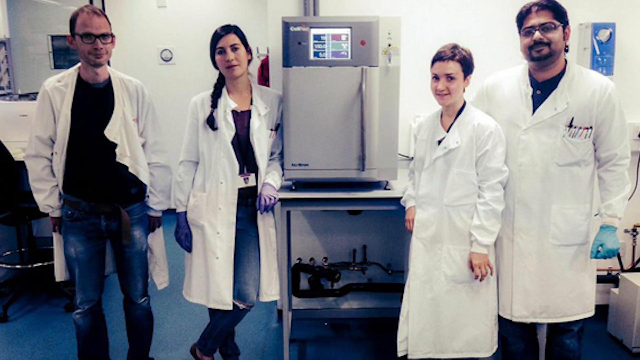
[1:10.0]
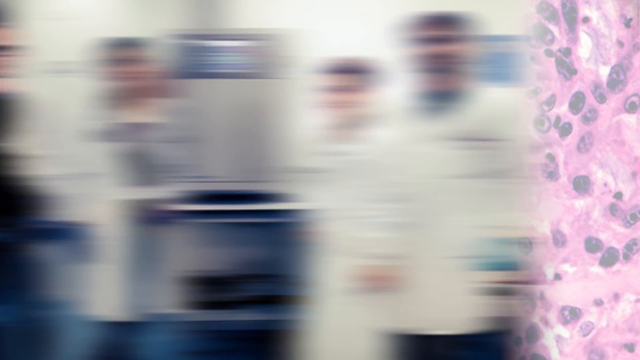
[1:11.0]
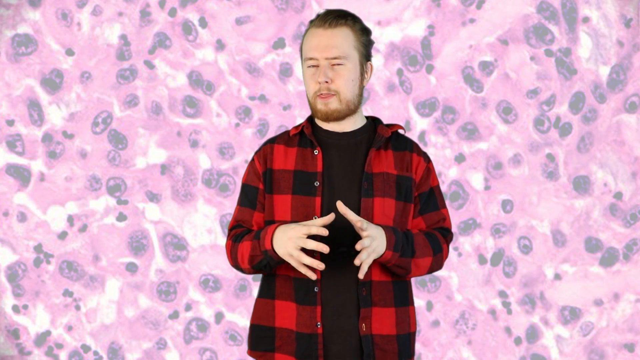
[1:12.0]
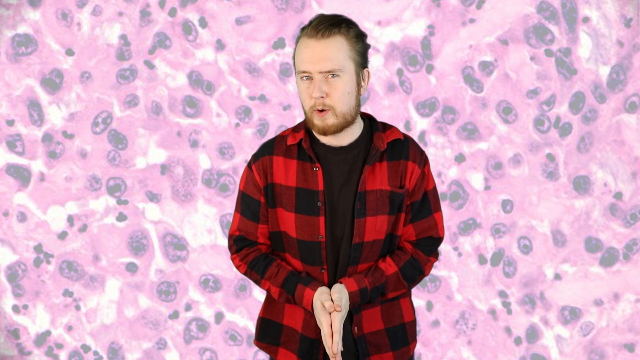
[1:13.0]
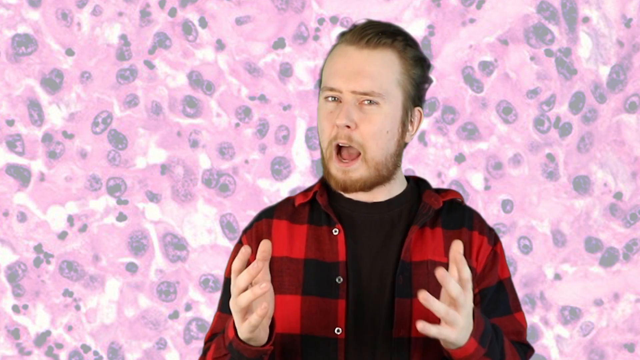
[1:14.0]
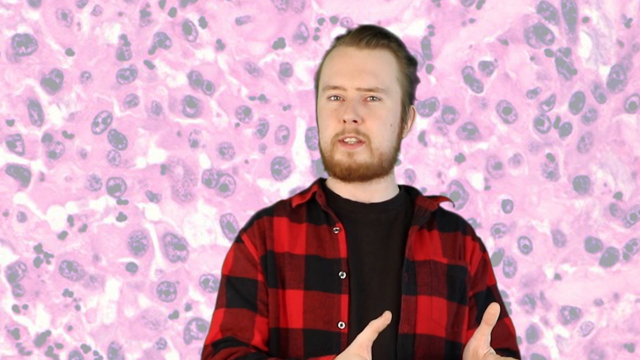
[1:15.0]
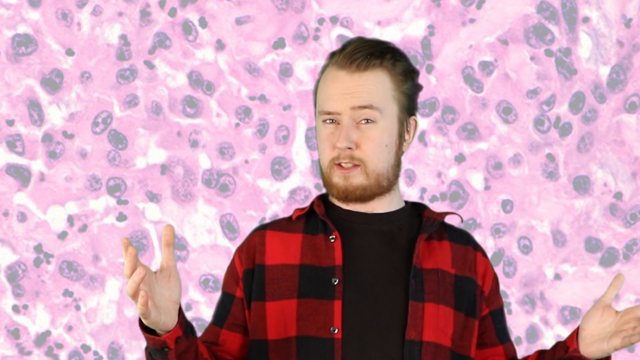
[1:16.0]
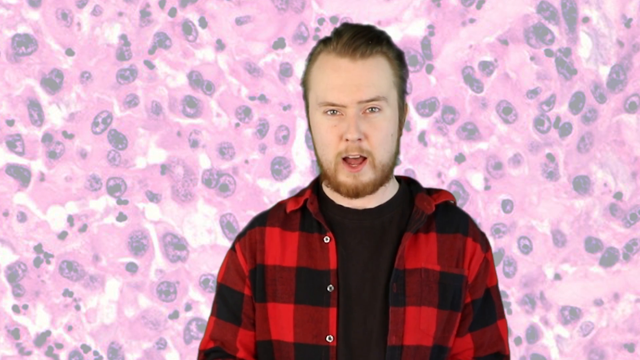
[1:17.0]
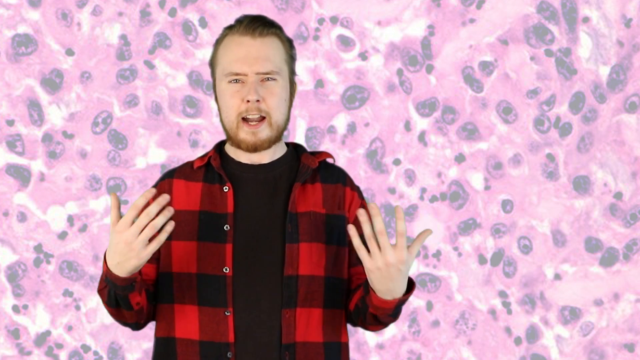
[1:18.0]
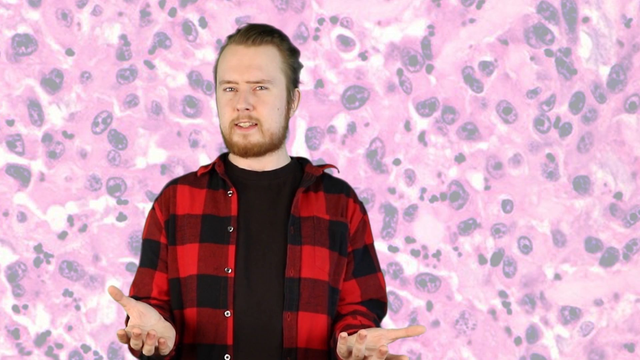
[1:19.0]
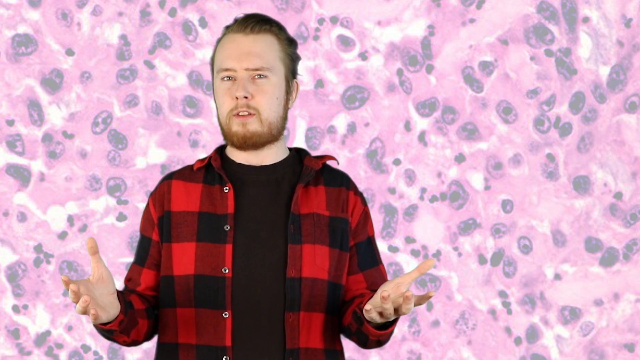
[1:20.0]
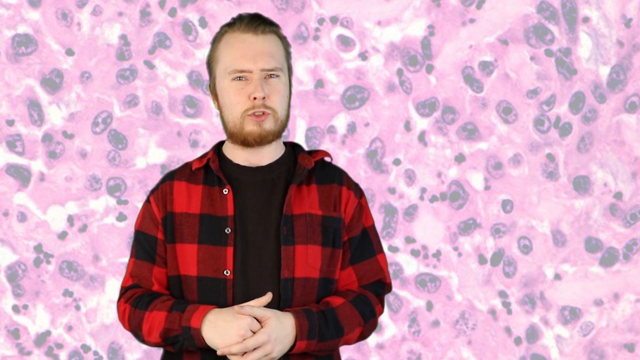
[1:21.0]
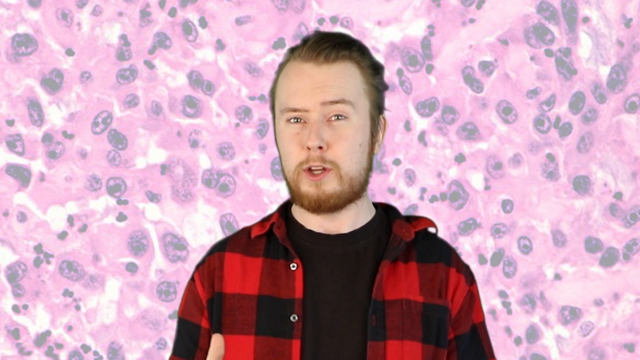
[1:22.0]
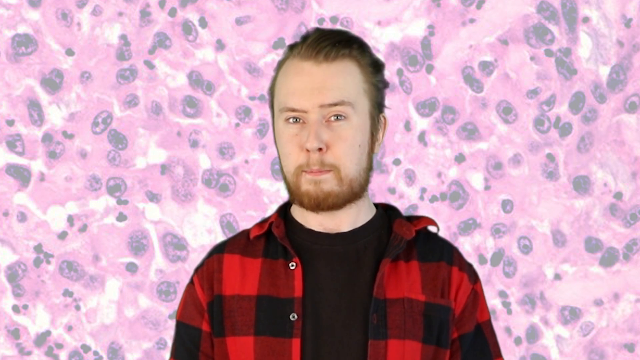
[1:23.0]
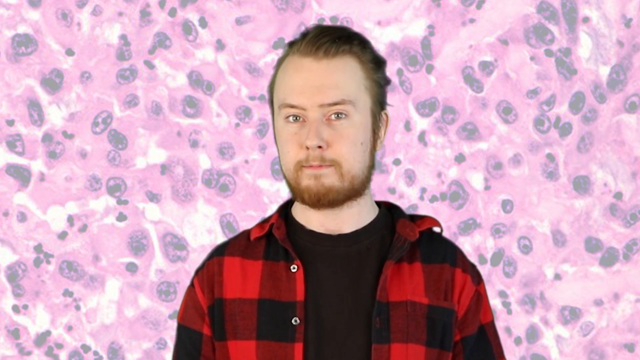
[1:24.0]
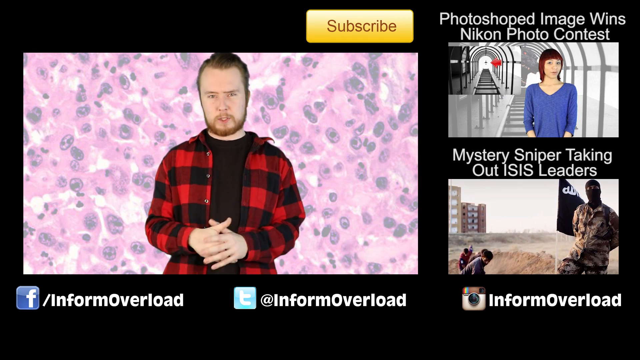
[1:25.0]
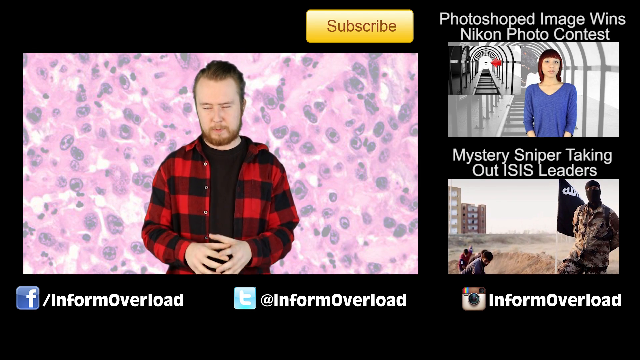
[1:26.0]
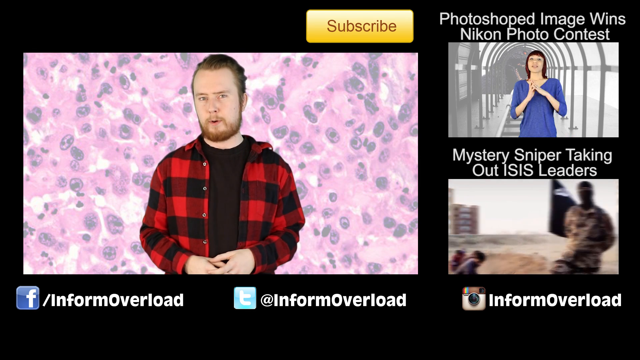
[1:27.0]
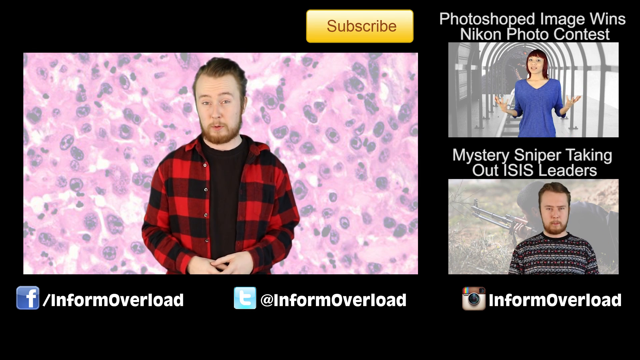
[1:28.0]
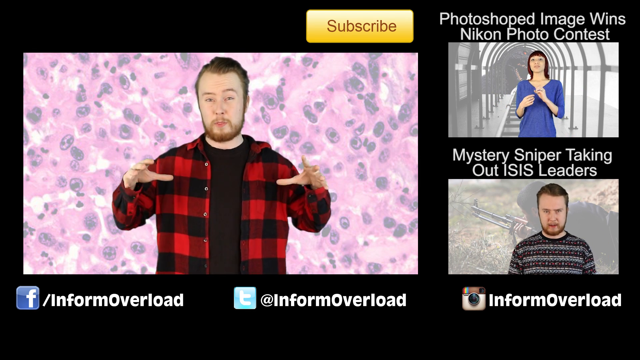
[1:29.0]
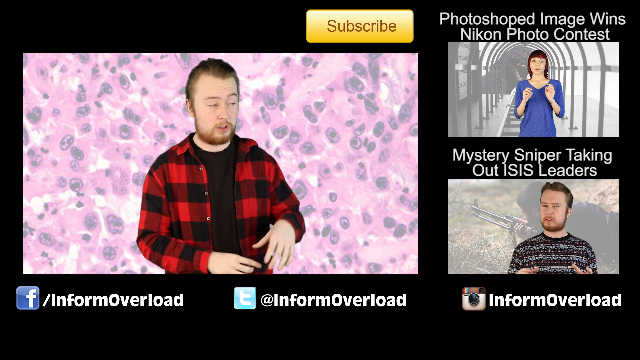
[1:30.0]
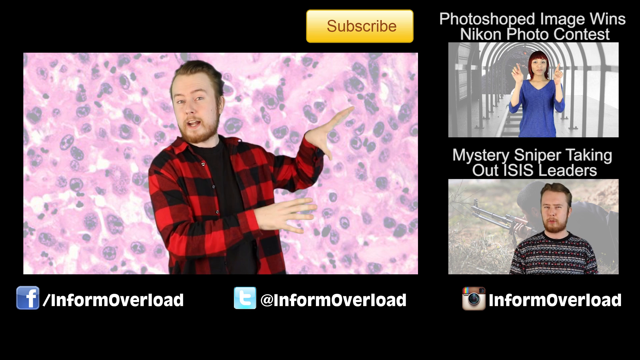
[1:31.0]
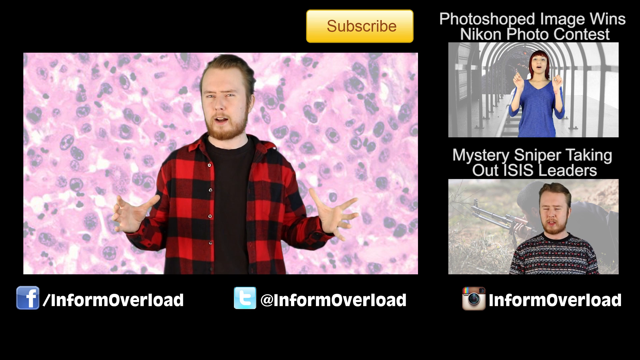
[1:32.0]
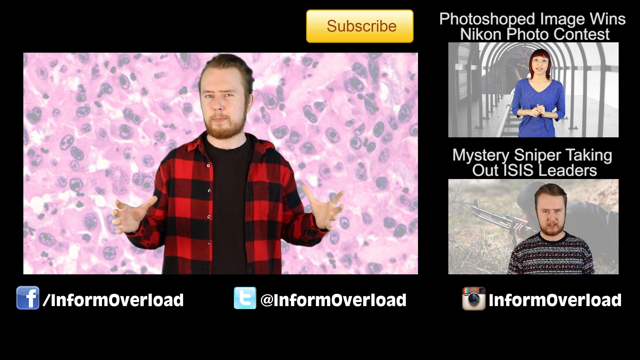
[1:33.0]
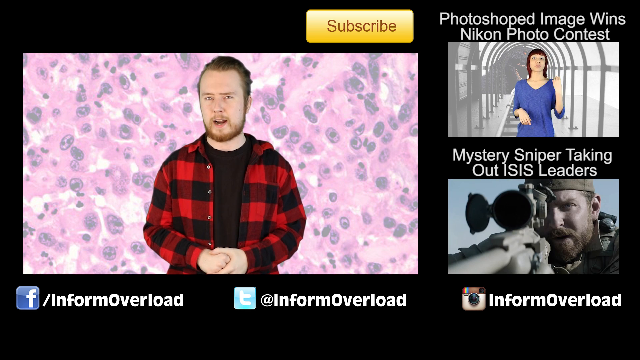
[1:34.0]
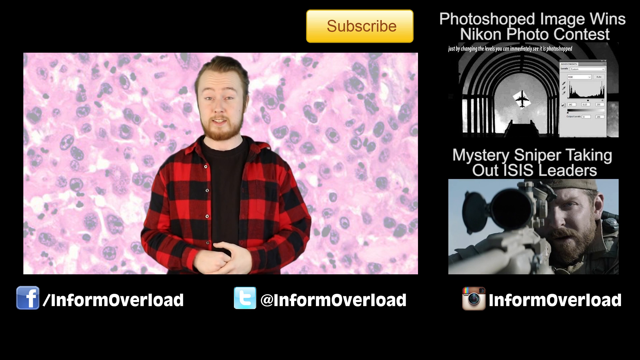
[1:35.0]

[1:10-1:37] Four people who look like scientists, wearing white lab coats, are shown with something that looks like a tiny refrigerator up on a desk in the middle of them. The picture gives way to a man speaking straight into the camera, wearing a red plaid shirt; on the wall behind him is what looks like a view into a petri dish full of pink and gray blobs. He has brown hair and a full beard. He holds his hands out in front of him, puts them in front of him a couple of times, and claps them directly in front of his stomach. The camera zooms in a little to show his head and shoulders, with the tops of his hands just barely visible below. He squats down a little, talking very emphatically and using his whole body. The view then zooms out to a page showing the man talking, with a subscribe button at the top and two small videos playing on the right side: one shows a lady in a blue shirt, and the one beneath looks like a soldier in camouflage. Text at the top reads "photoshopped image wins Nikon photo contest", and the one below reads "mystery sniper taking out ISIS leaders". Underneath is social media information for Facebook, Twitter, and Instagram. All of the pictures are moving at the same time, with the people in them talking simultaneously.